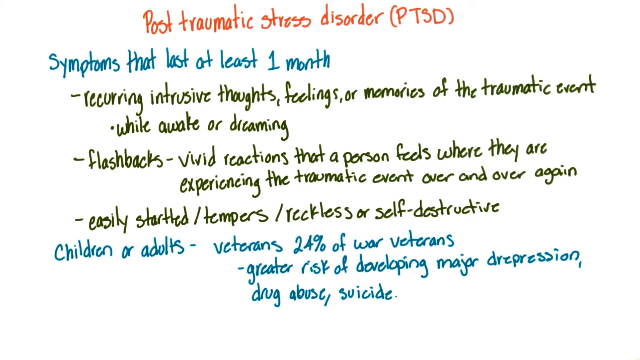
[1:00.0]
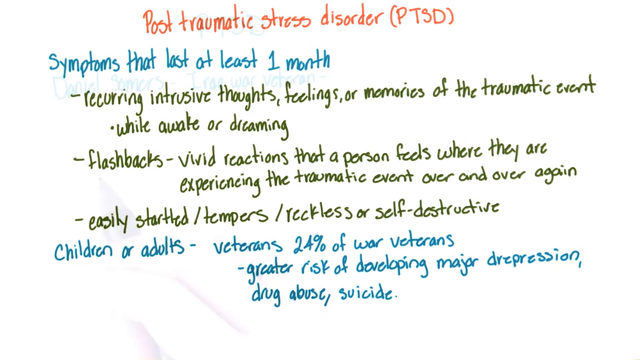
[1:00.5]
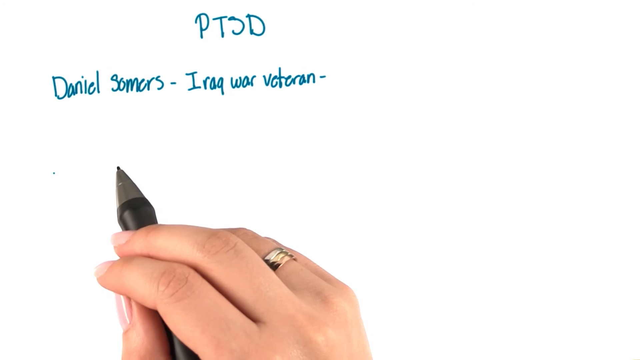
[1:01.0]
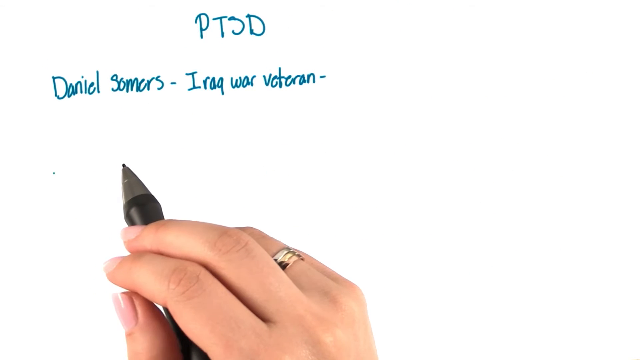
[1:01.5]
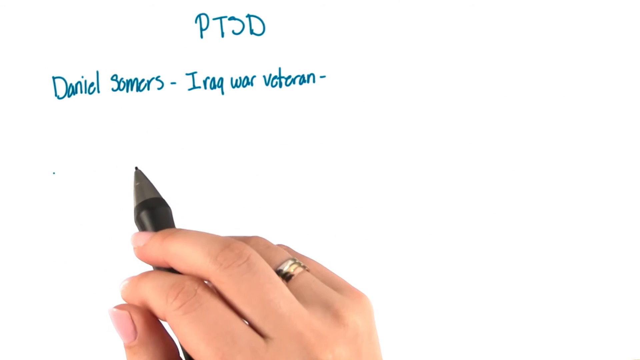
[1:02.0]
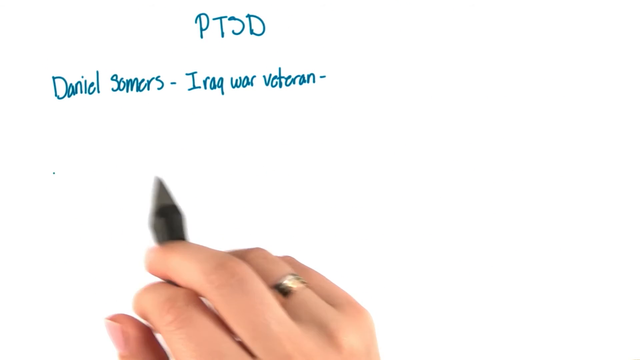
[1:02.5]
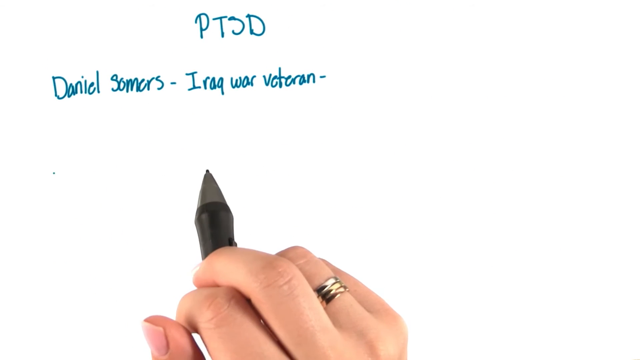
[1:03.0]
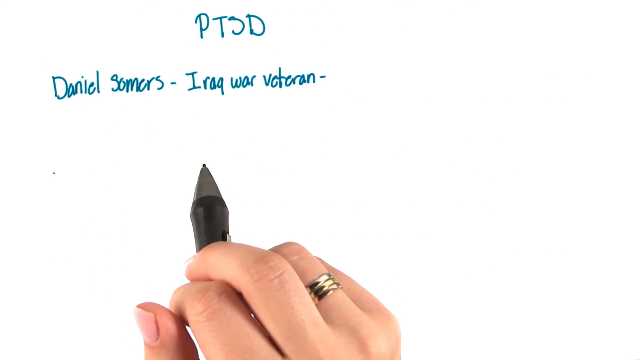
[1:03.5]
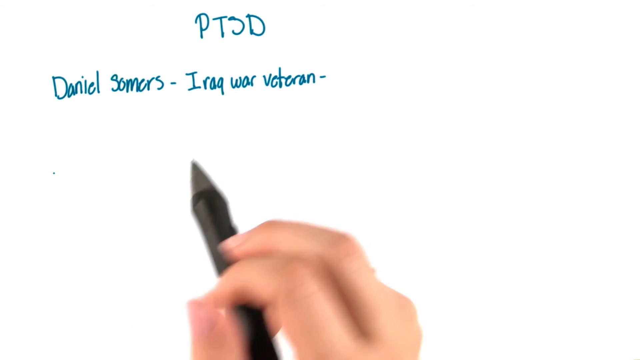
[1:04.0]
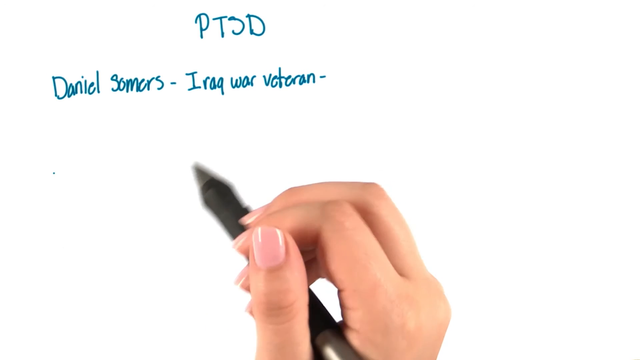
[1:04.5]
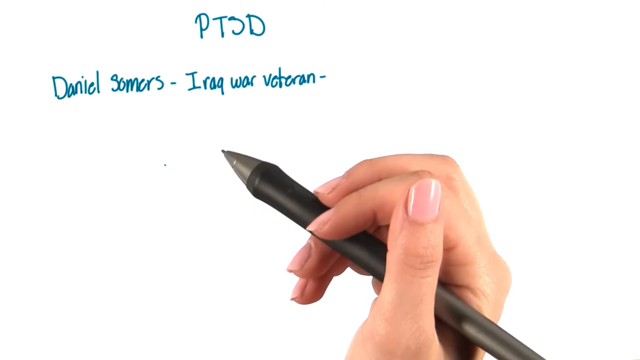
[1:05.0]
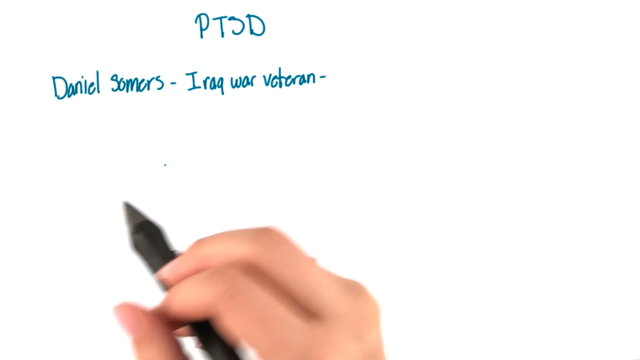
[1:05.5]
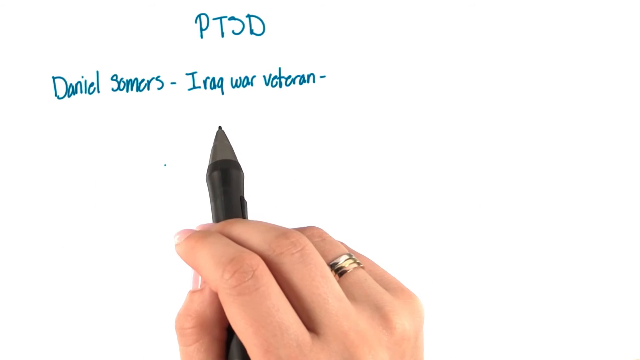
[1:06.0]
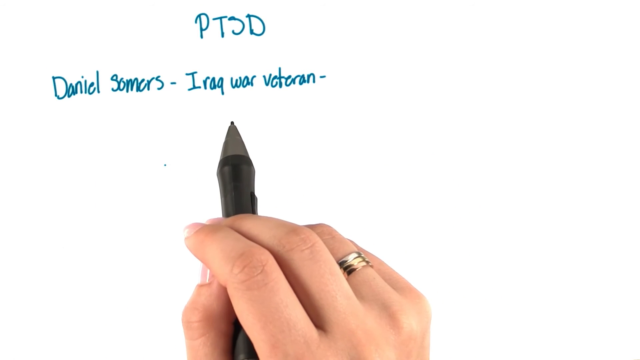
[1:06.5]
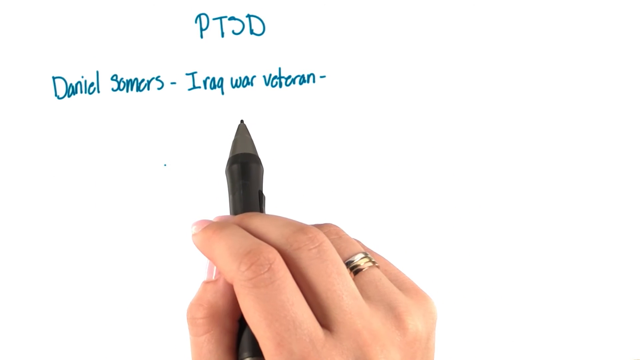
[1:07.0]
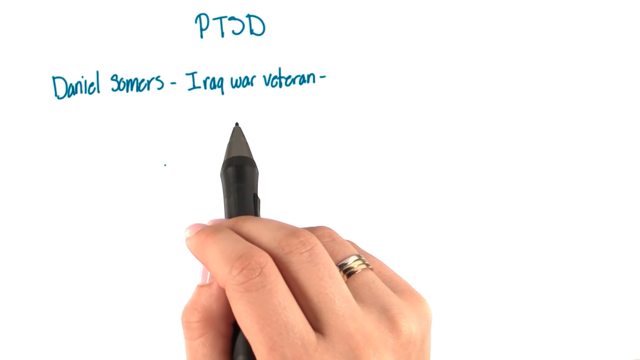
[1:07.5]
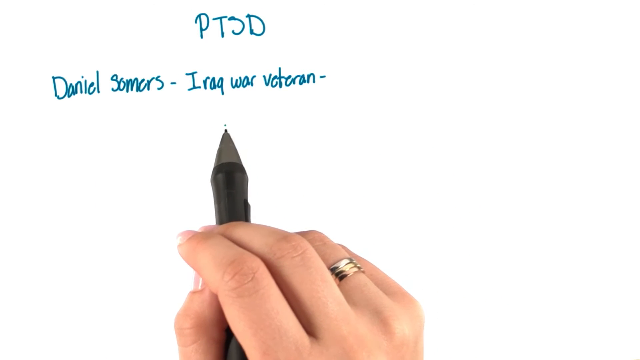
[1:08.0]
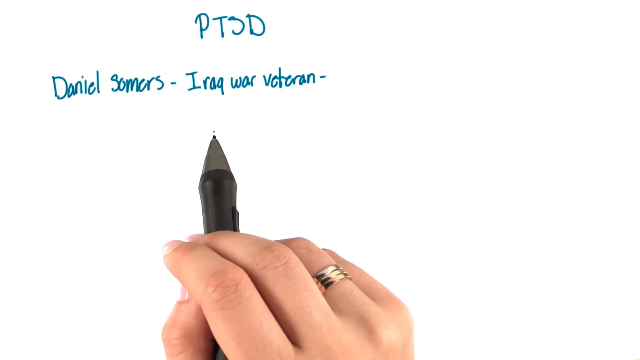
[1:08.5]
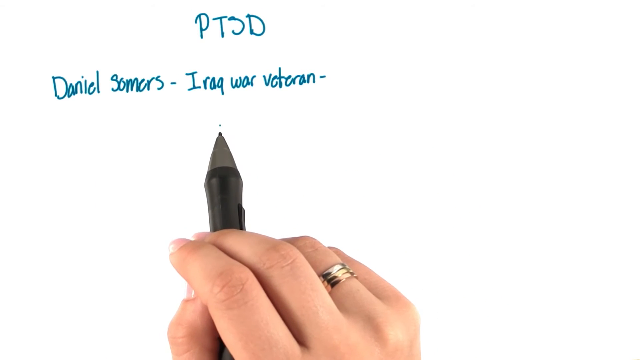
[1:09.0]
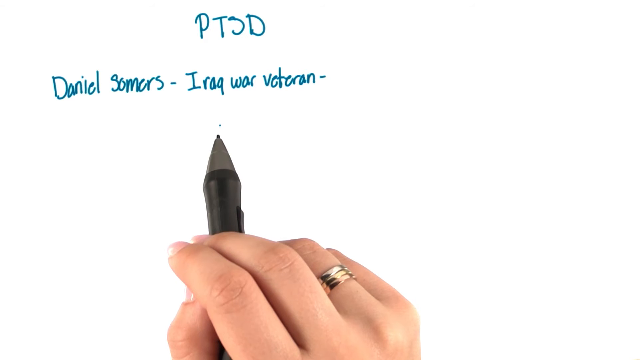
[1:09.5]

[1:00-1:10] The blue text at the bottom reads "children's or adults - veterans, 24% of war veterans," with "- greater risk of developing major depression" underneath and "drug abuse and suicide" below that. Then the video goes to the next page. The hand starts just left of center at the bottom, showing the back of half of the pointer finger, the ring finger and the middle finger, a little of the pinky, and the thumb coming up the side of them on the left. The pen's black grip and the silver around its tip point upward. Across the top, in blue and left of center, is "PTSD" in capitals. Below it, about an inch from the left side and still in blue, the text reads "Daniel Somers - Iraq war veteran -". The pen is just pointing; the hand kind of moves a little to the right, showing the underside of the palm, then returns to its position at the bottom, where just the back of the fingers and the thumb are visible, and the pen starts poking up.